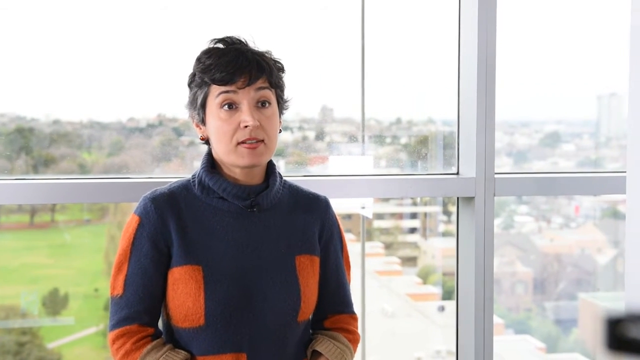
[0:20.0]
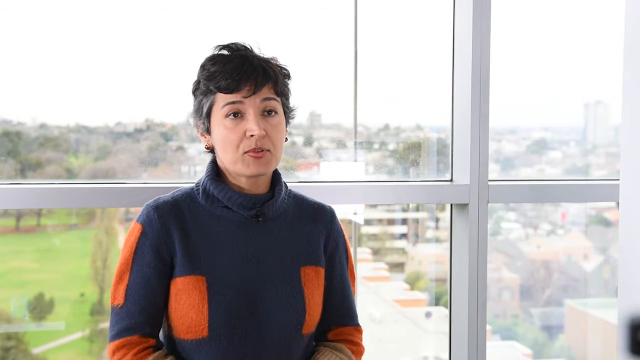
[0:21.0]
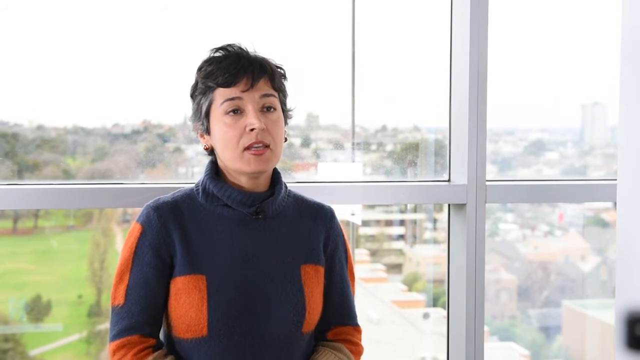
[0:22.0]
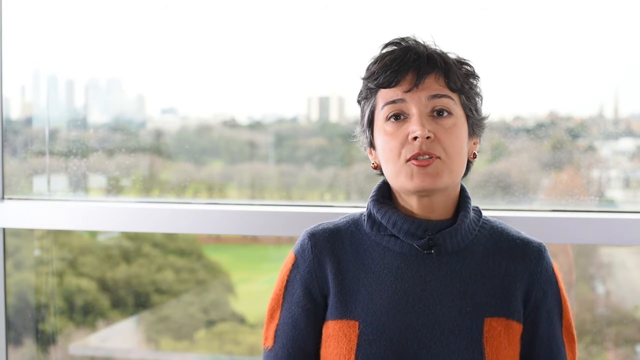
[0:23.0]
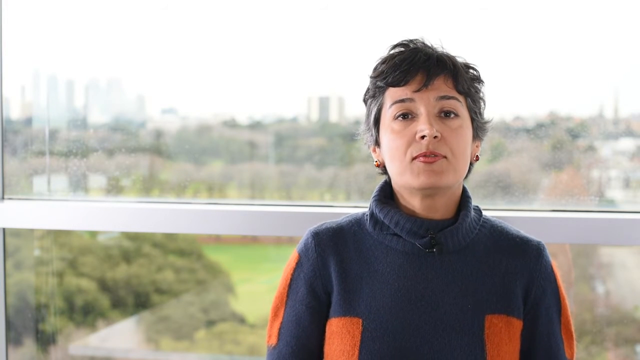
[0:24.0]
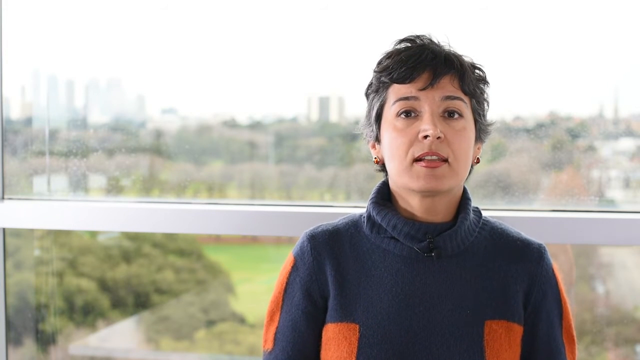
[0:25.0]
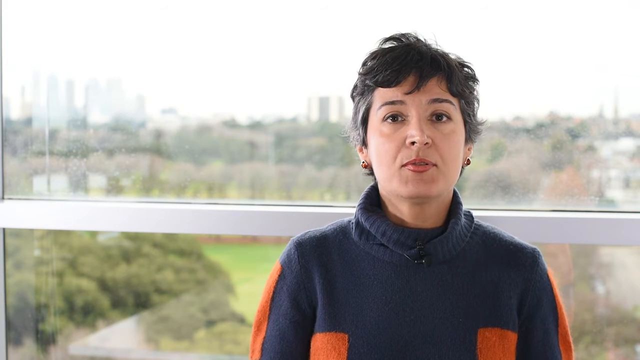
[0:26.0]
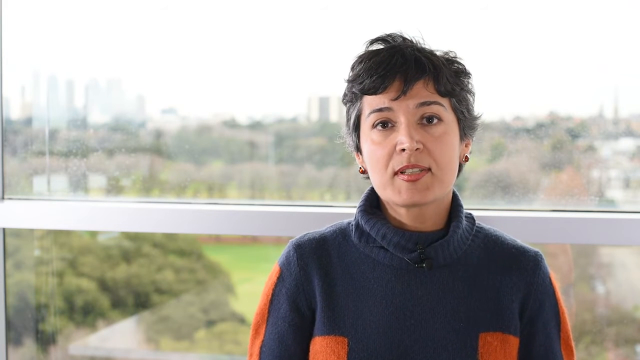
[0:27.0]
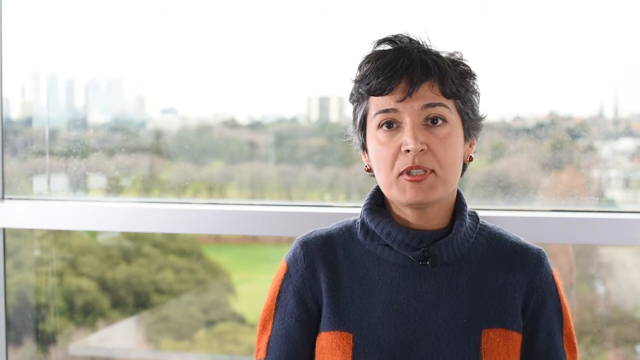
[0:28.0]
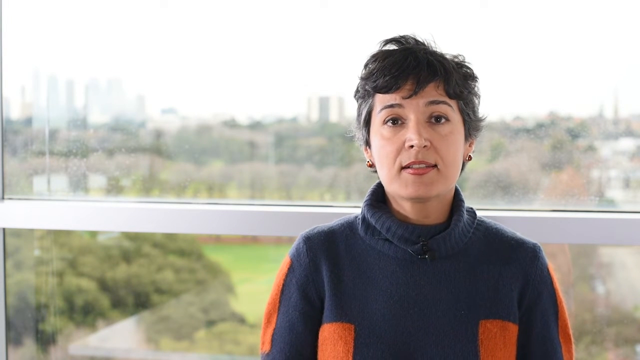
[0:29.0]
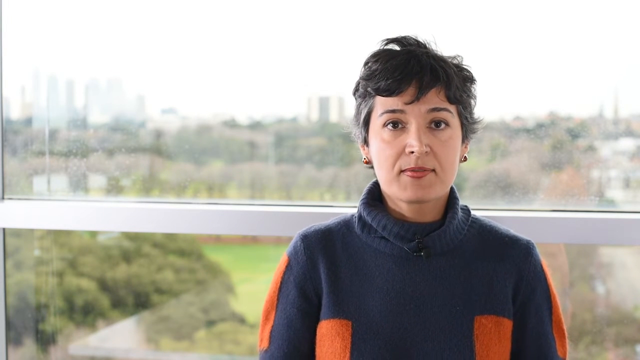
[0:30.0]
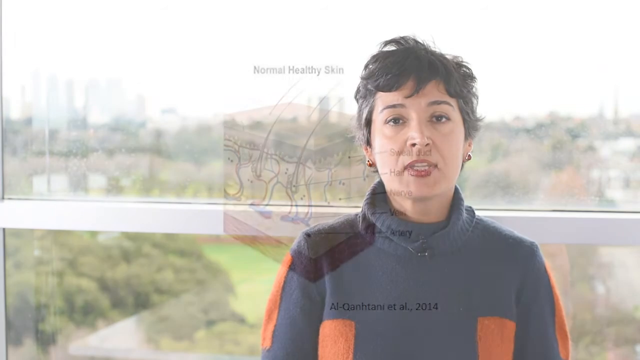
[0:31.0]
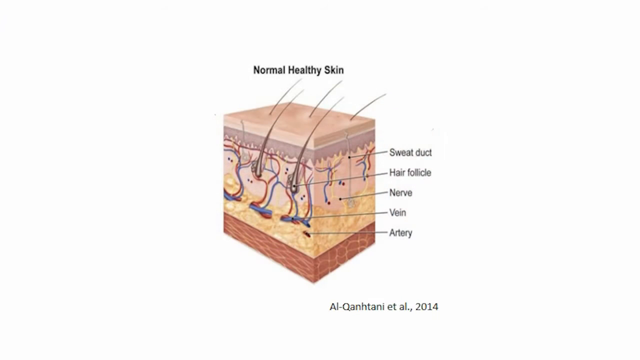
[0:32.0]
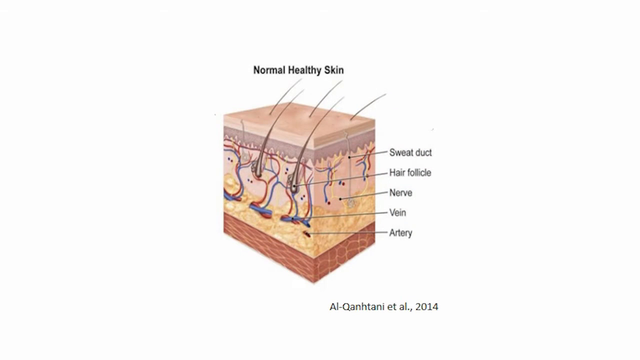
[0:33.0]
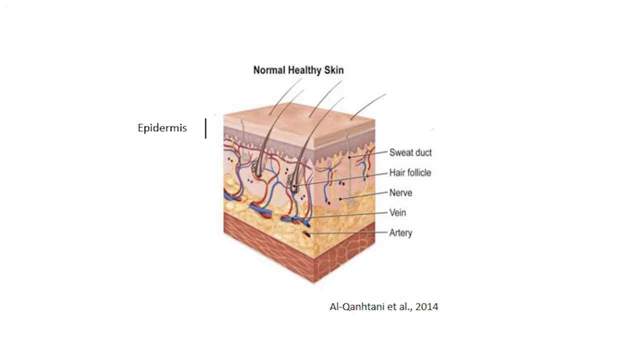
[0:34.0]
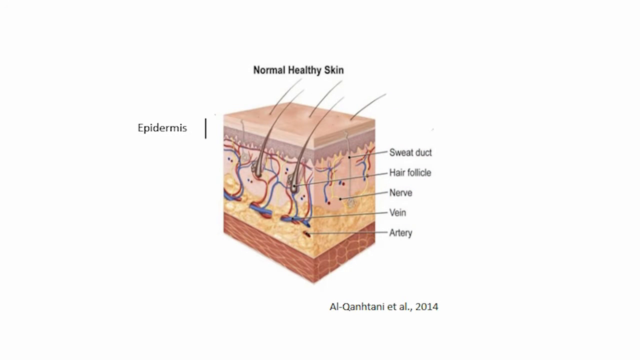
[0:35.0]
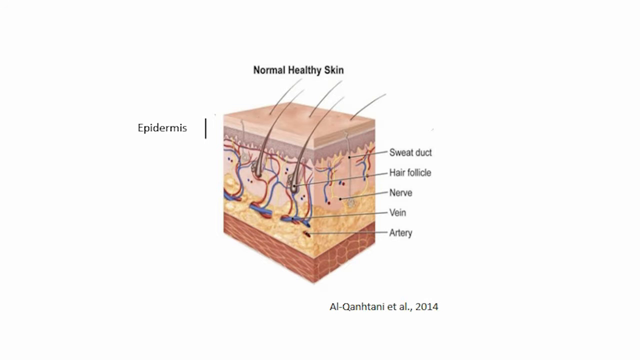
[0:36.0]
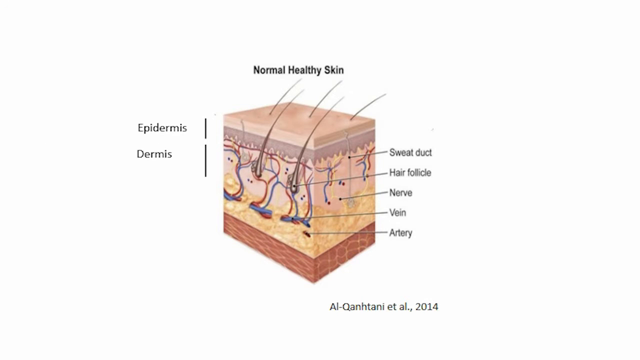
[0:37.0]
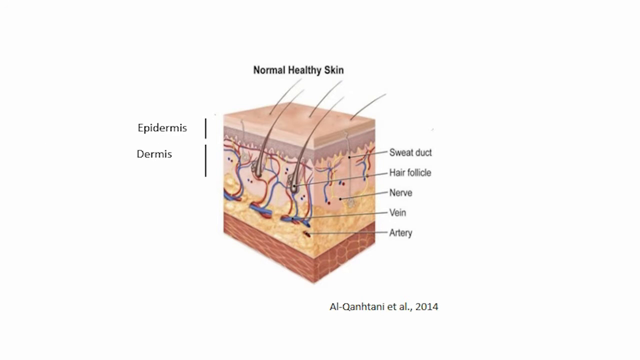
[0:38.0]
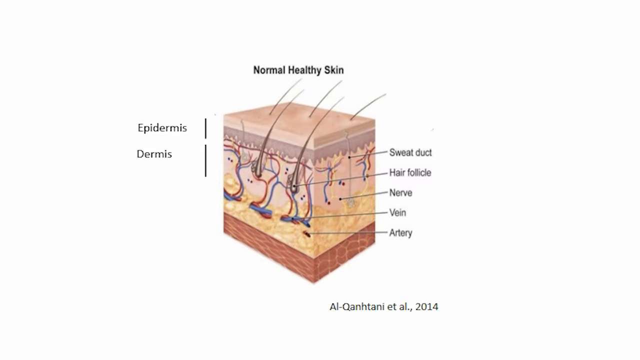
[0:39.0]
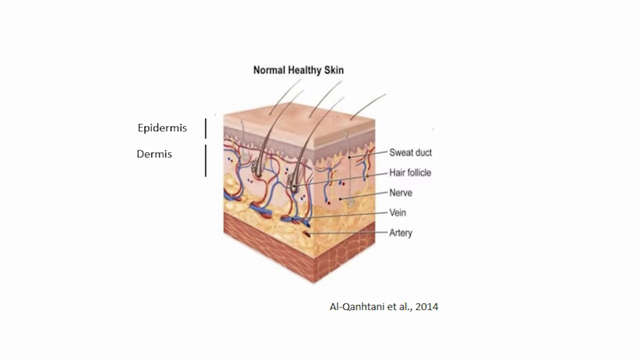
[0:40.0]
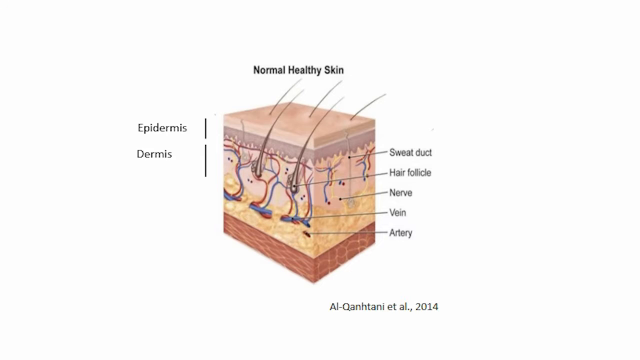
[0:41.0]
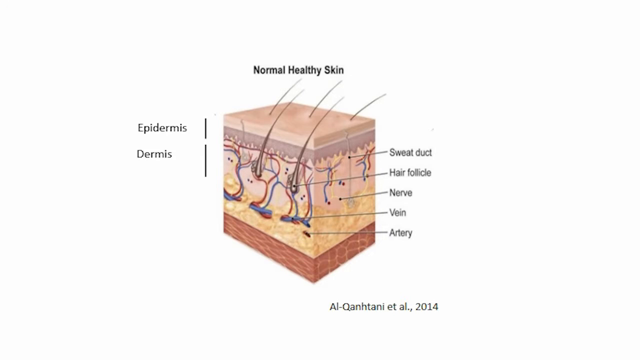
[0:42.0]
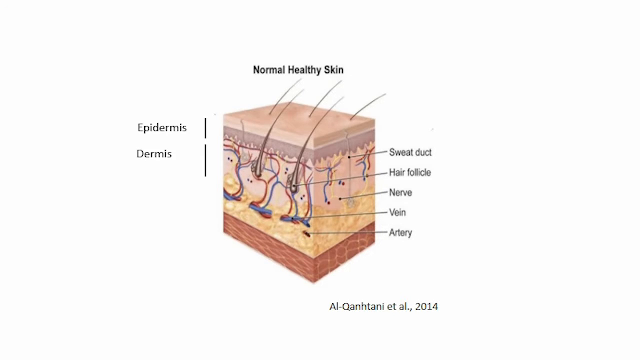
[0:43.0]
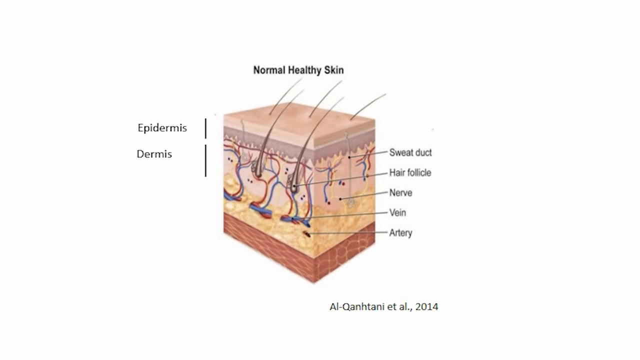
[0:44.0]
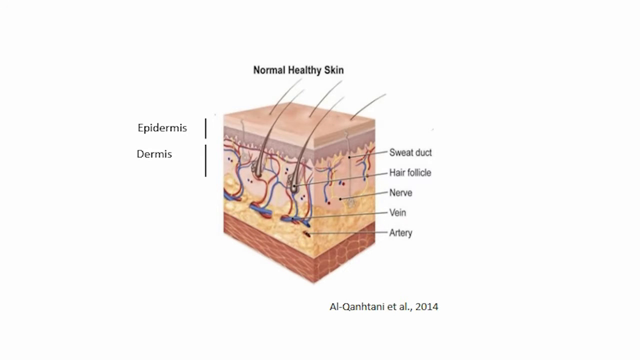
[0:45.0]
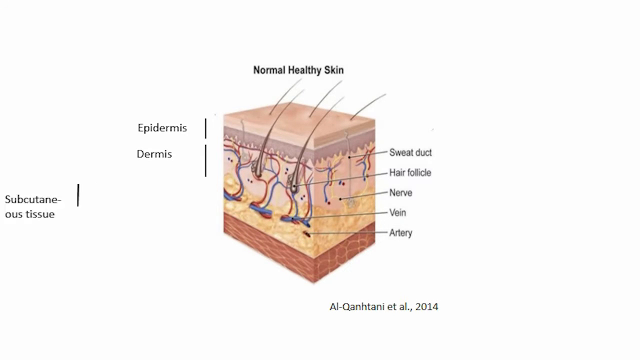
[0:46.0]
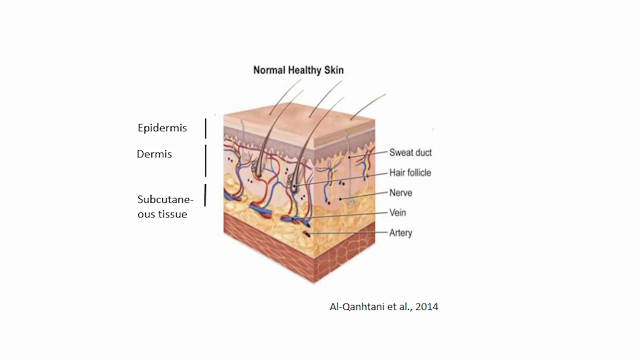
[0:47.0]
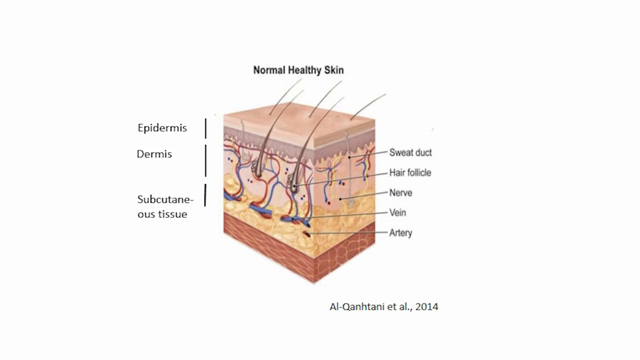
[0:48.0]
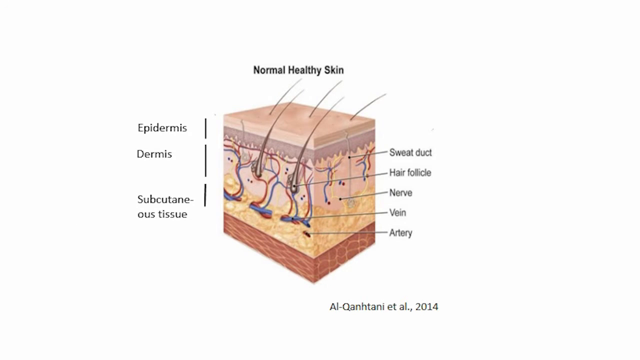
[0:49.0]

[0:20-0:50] A woman stands in front of a window looking out over a city, with greenery and a park on the left and more of the city, with roads and buildings, on the right. Later the woman is on the right of the frame with the city behind her on the left. She has black hair and wears a sweater. A diagram shows an epidermis; to the right, a sweat duct is pointed to, and a hair follicle with a black dot and a line connecting to it is pointed to. There is also a nerve, a vein and an artery. These are all on a cube that has been cut out and placed on the side, with the text "AI Kwantani et al 2014". The diagram is drawn, then the word "dermis" comes down and goes below the epidermis, and then the subcutaneous tissue appears.